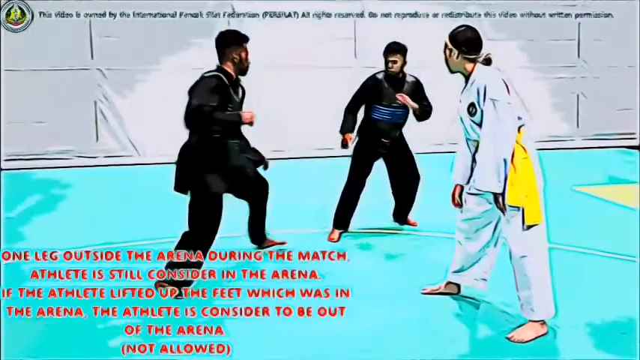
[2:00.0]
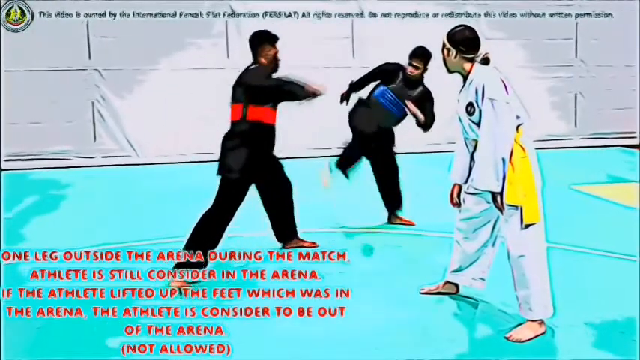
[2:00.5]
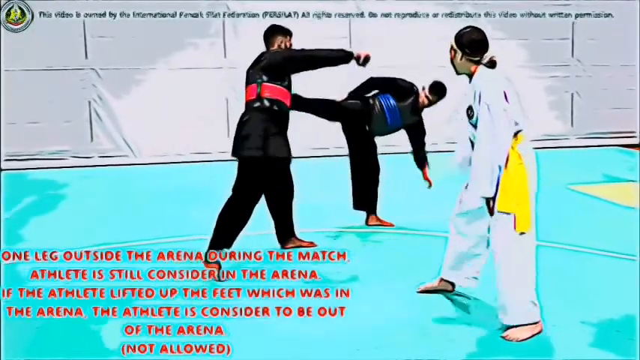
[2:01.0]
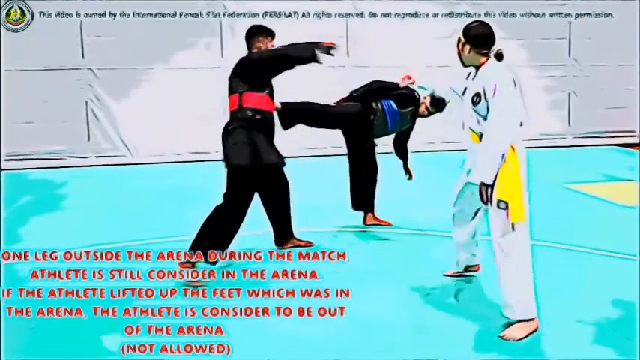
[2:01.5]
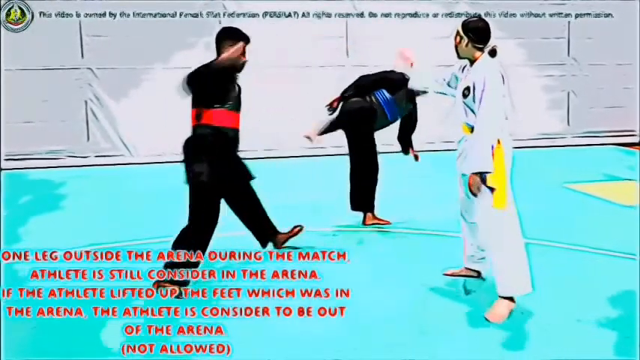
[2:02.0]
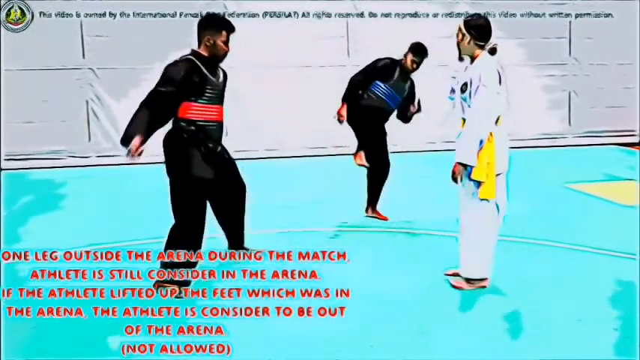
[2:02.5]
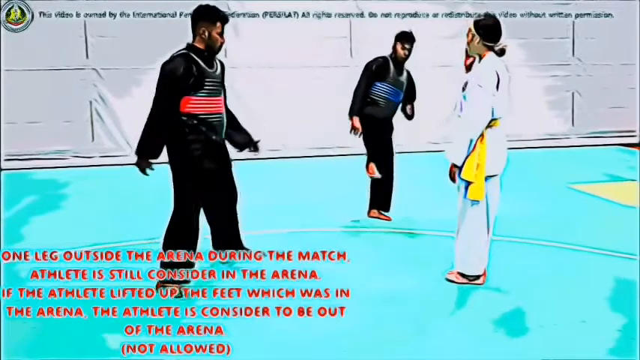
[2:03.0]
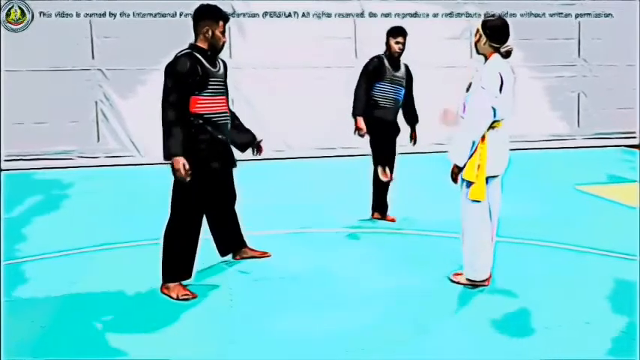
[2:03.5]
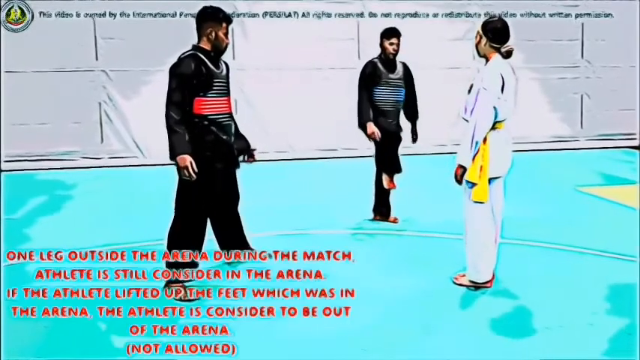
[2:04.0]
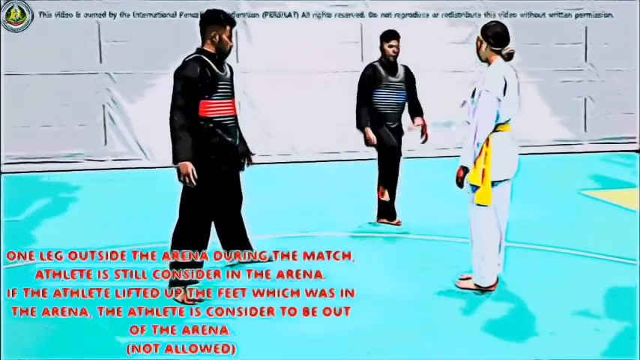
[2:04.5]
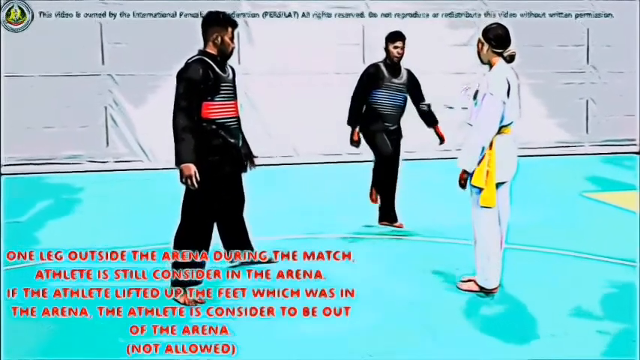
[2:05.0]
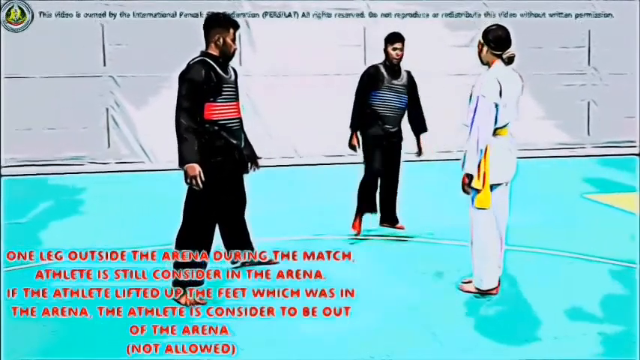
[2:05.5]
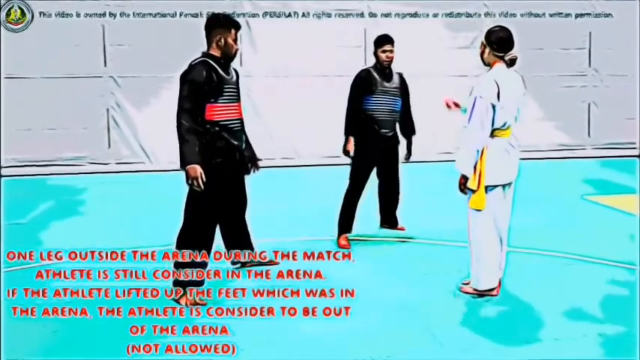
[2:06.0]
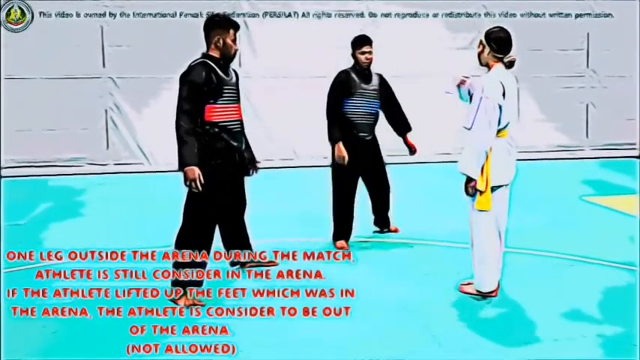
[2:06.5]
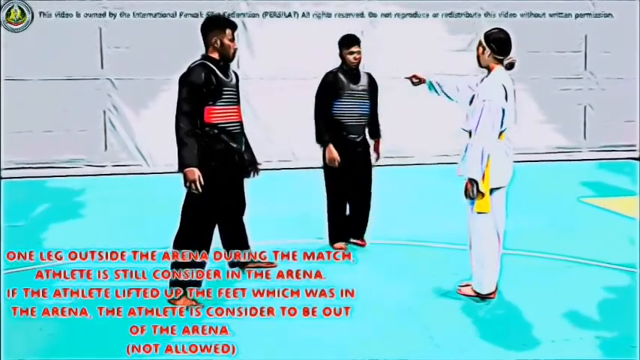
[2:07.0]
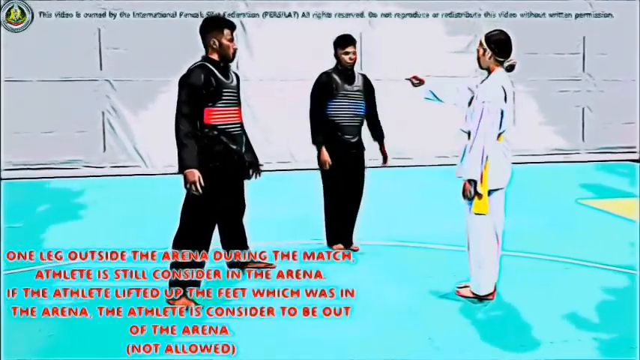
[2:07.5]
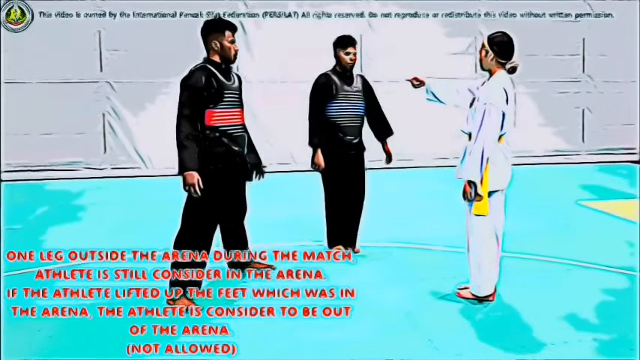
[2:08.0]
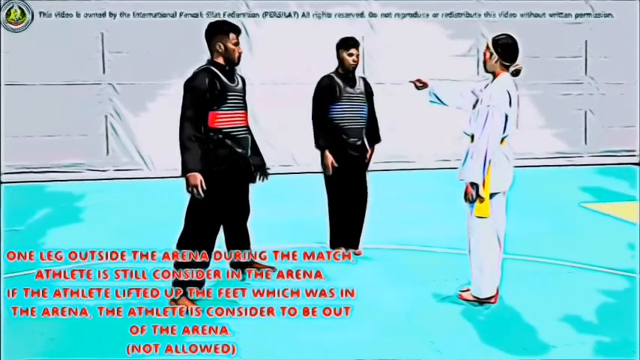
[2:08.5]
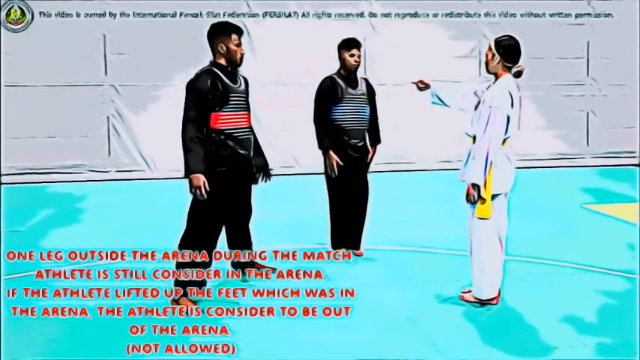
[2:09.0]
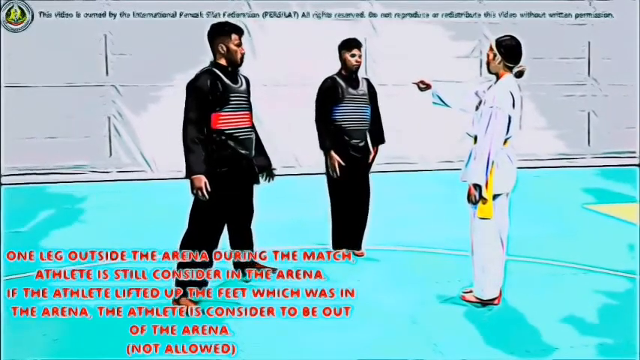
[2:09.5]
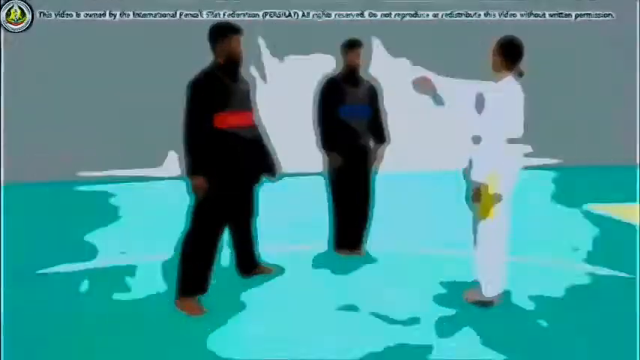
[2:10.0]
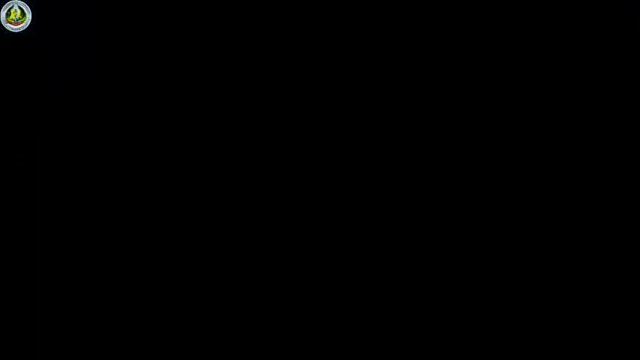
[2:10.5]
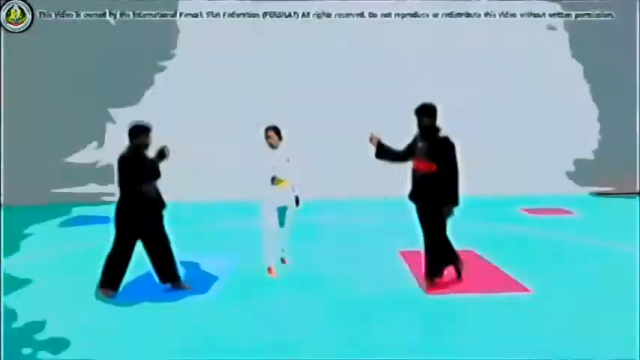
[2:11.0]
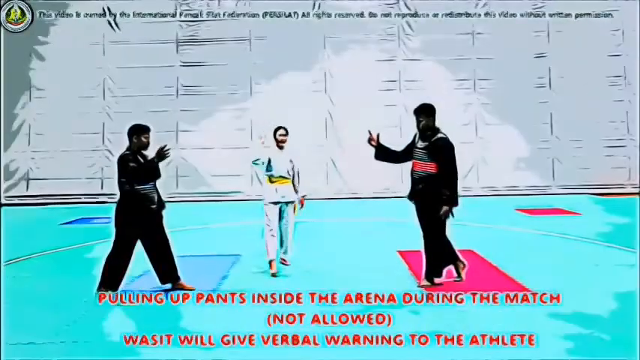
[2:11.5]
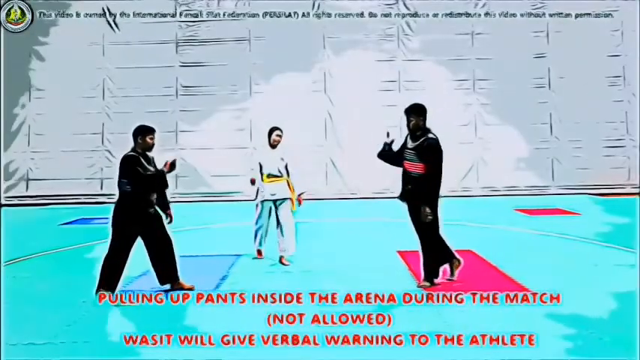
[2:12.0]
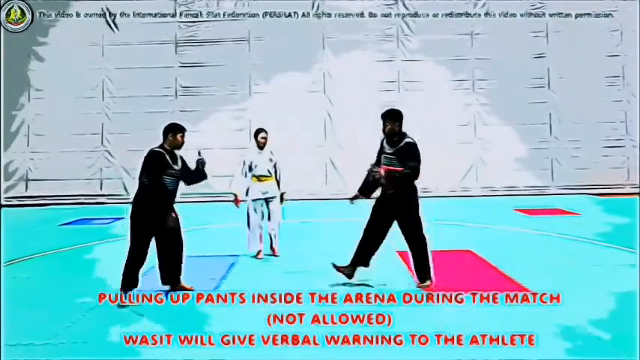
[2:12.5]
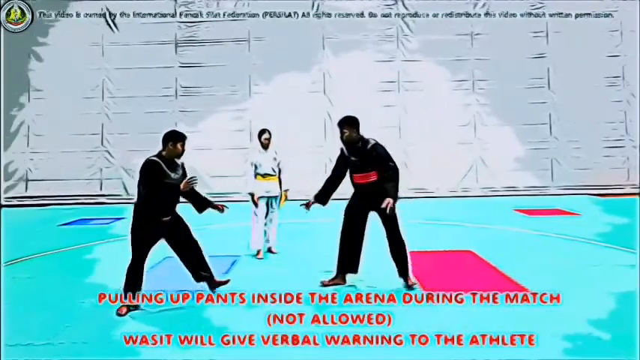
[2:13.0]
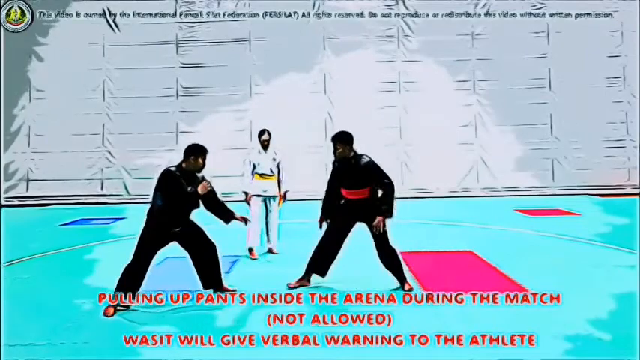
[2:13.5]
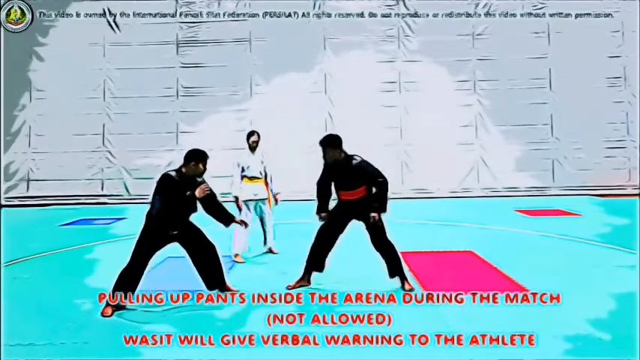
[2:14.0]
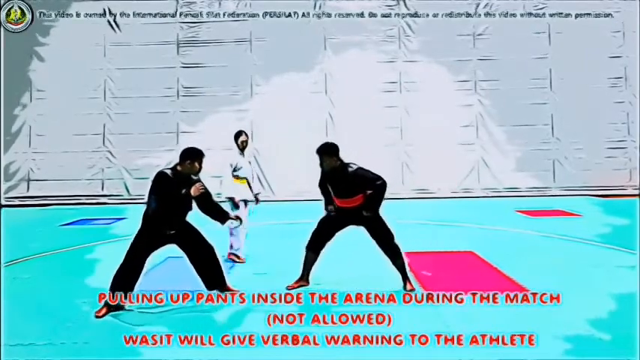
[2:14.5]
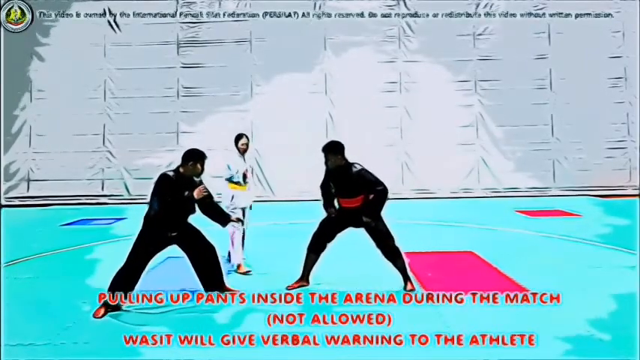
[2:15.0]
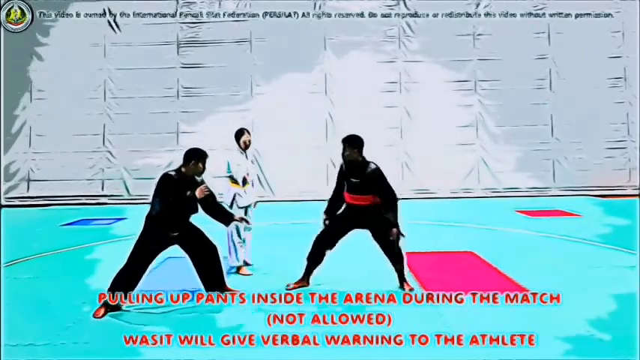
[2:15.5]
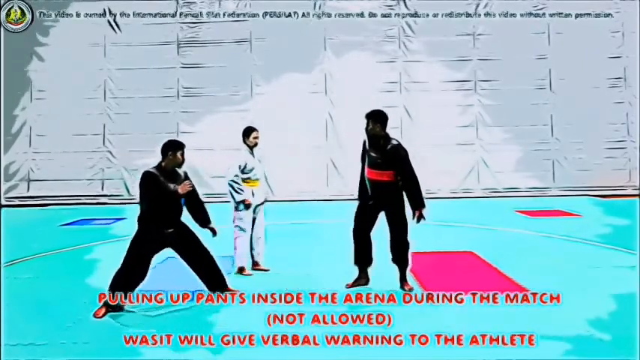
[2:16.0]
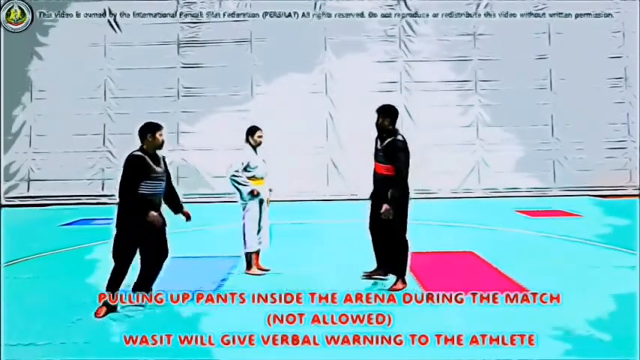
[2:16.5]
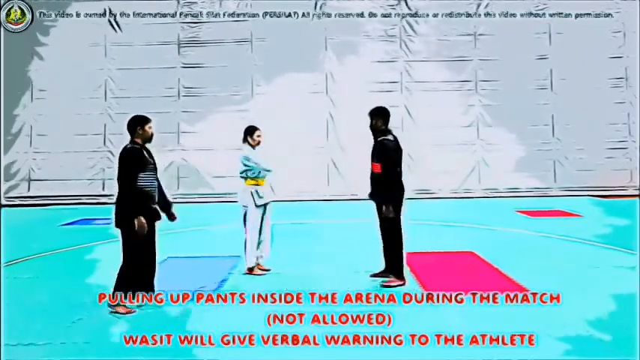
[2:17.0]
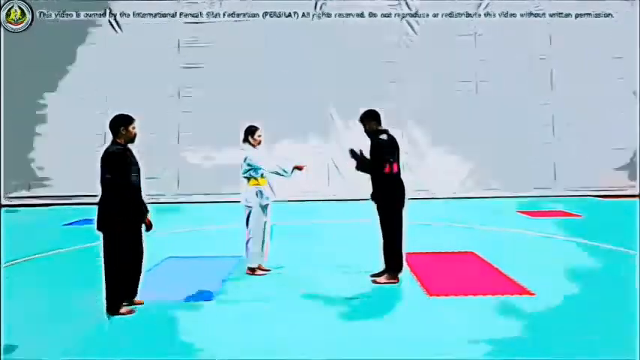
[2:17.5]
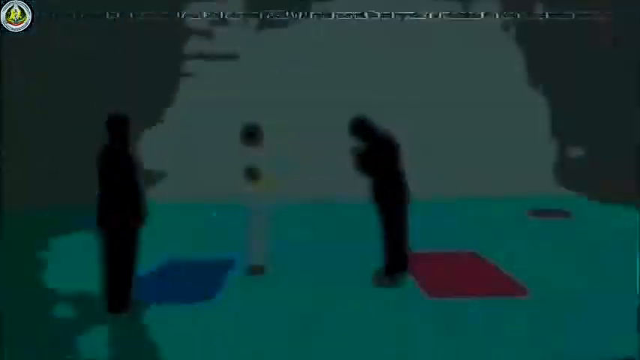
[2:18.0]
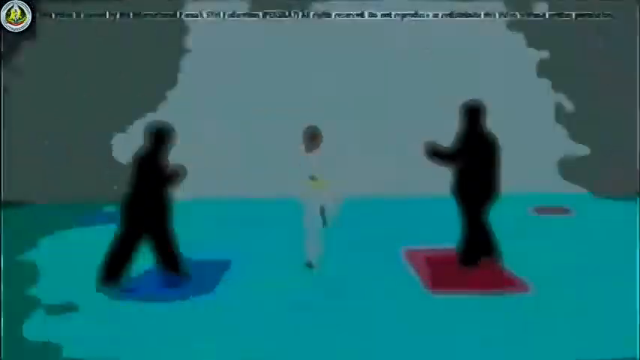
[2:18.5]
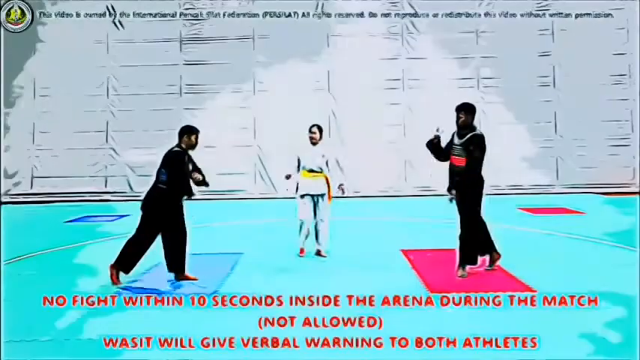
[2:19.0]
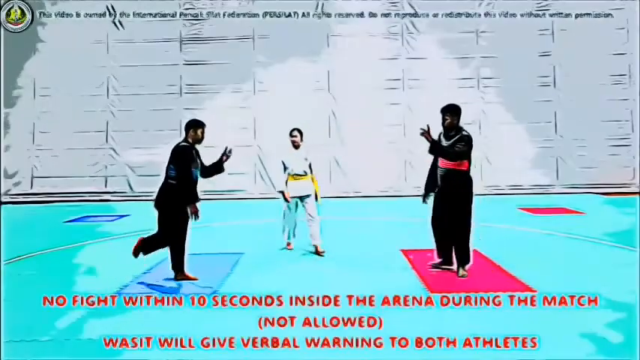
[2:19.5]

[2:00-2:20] What appears to be a martial arts contest between two individuals takes place in an arena with a referee. The rules shown state that a leg cannot be outside the arena, both players must be inside the arena, and both must have fists drawn inside the arena. One player has a red belt and the other a blue belt. The wassit, apparently the referee, is in a white uniform with a gold belt. Both athletes are very young. A rule shows that pulling up pants is not allowed, and a rules violation is shown.